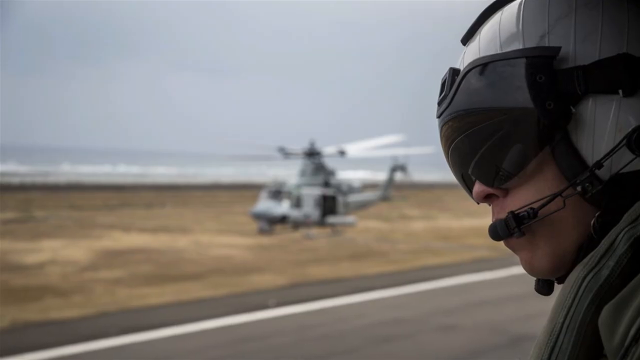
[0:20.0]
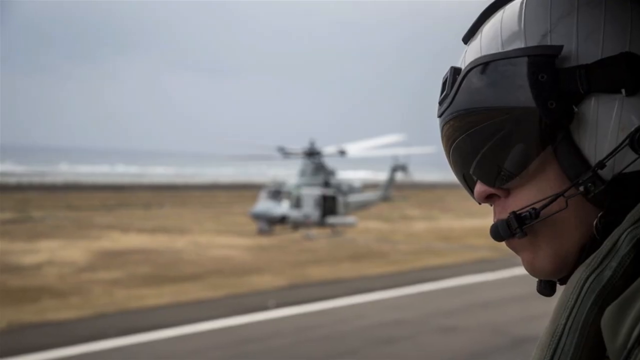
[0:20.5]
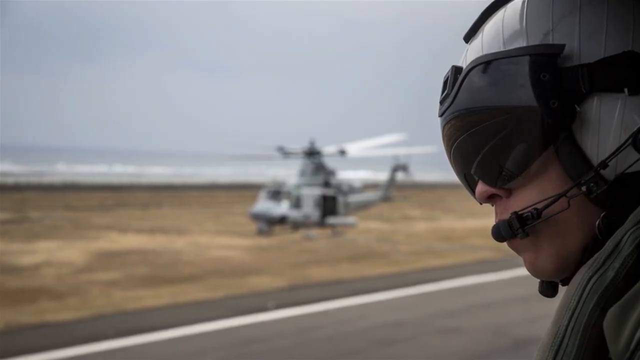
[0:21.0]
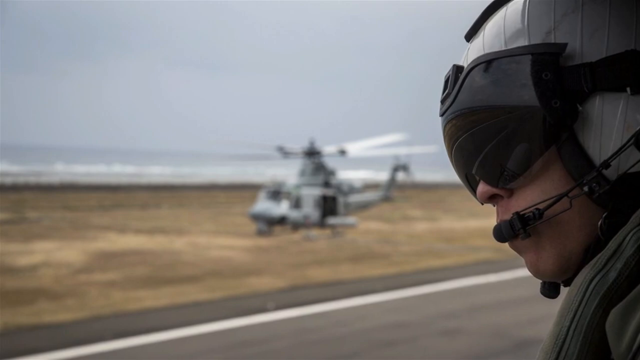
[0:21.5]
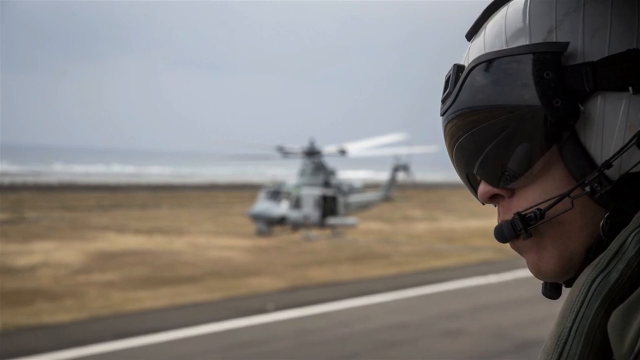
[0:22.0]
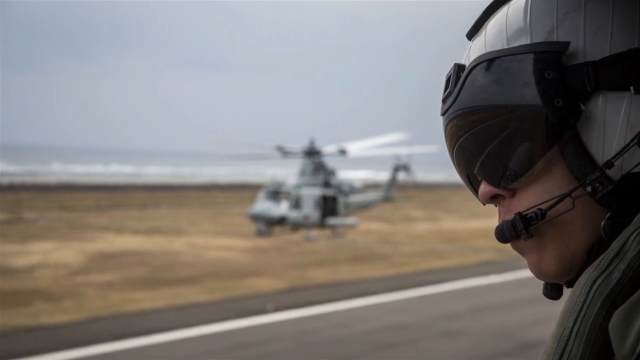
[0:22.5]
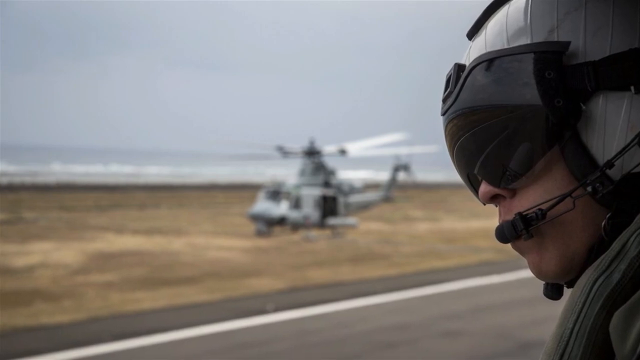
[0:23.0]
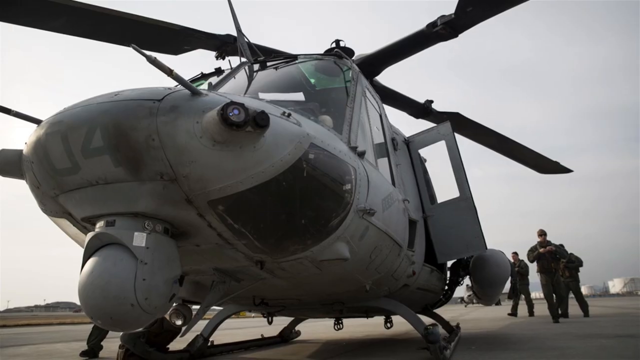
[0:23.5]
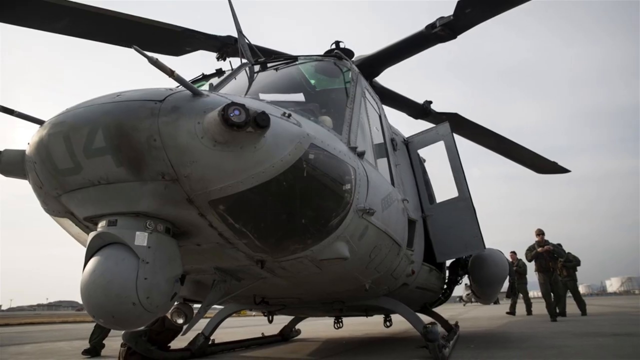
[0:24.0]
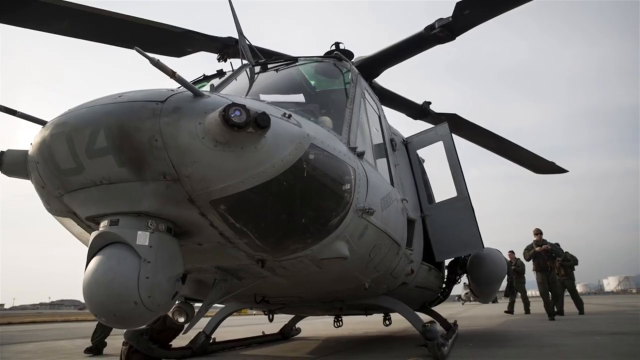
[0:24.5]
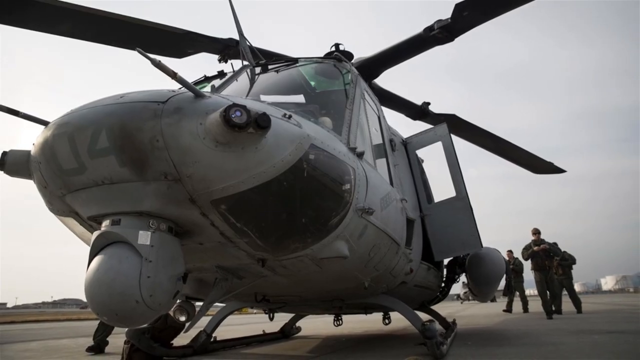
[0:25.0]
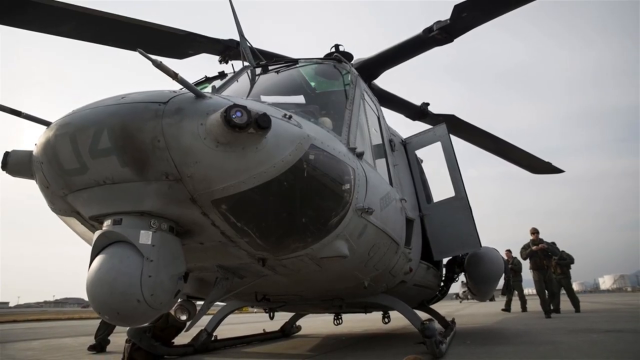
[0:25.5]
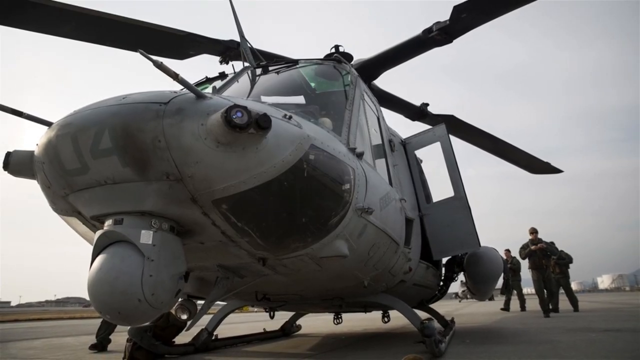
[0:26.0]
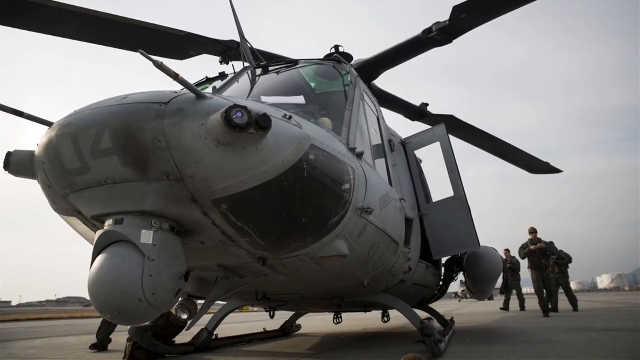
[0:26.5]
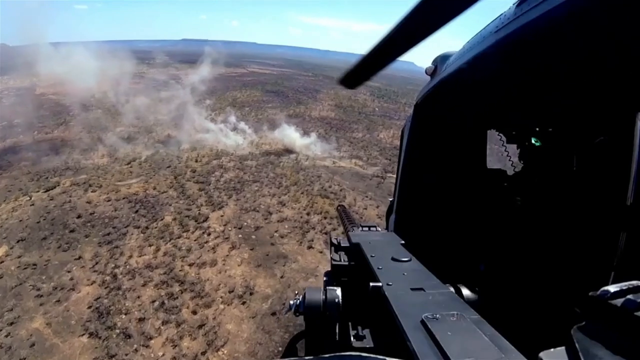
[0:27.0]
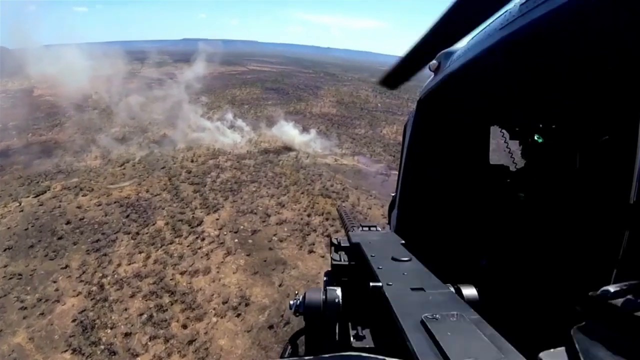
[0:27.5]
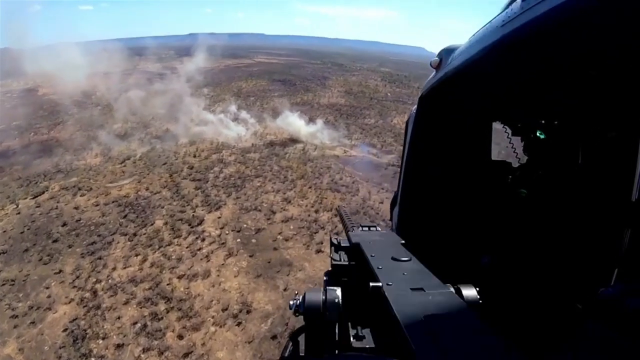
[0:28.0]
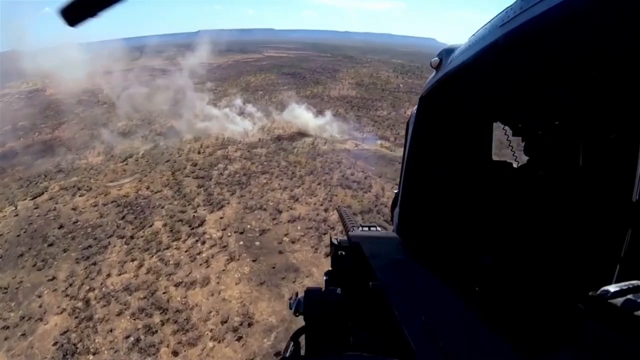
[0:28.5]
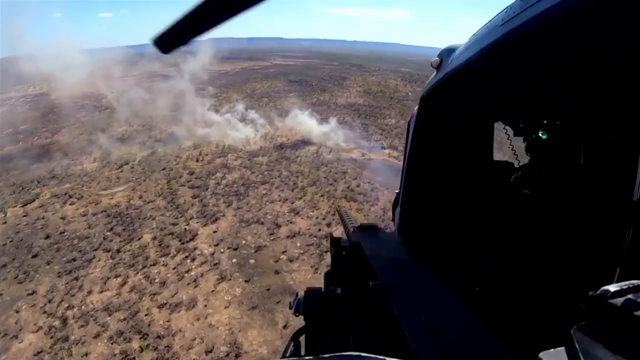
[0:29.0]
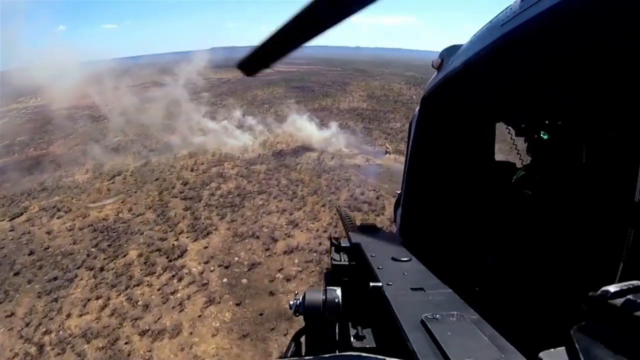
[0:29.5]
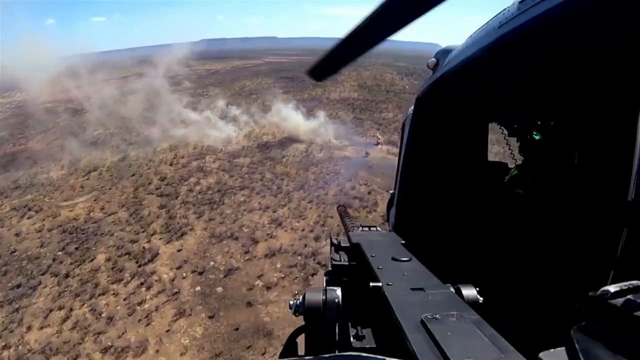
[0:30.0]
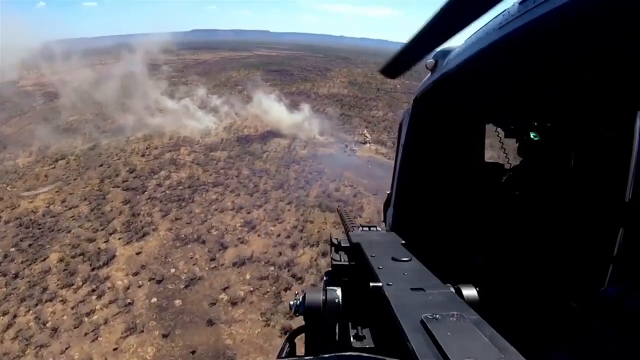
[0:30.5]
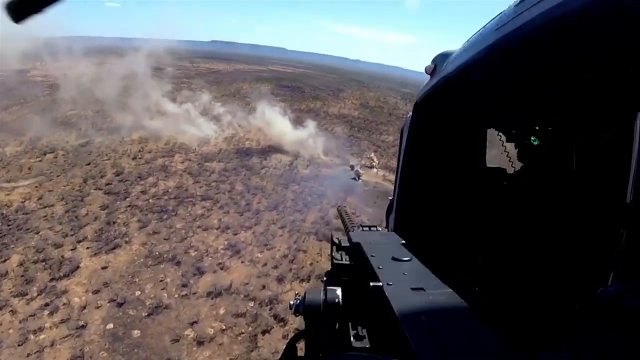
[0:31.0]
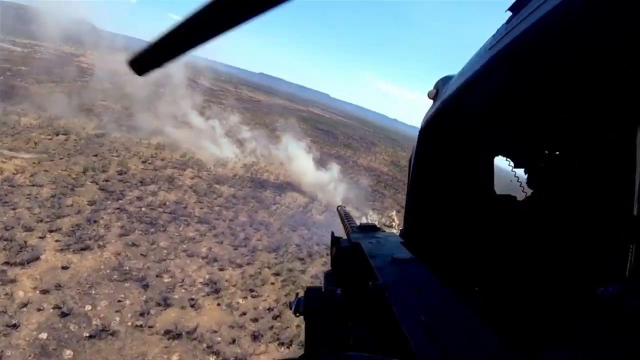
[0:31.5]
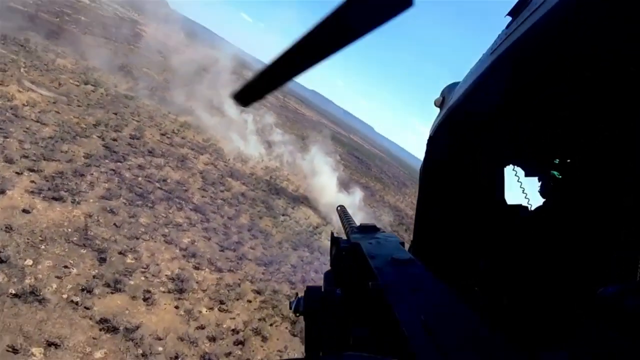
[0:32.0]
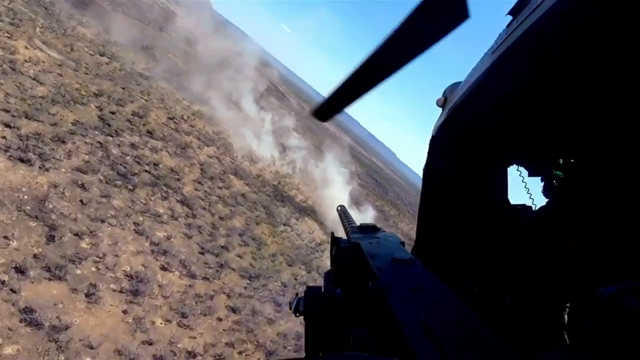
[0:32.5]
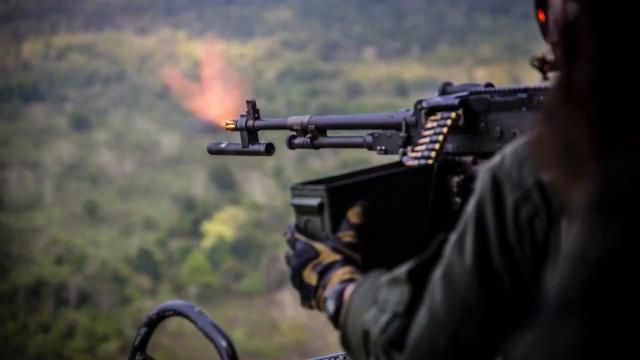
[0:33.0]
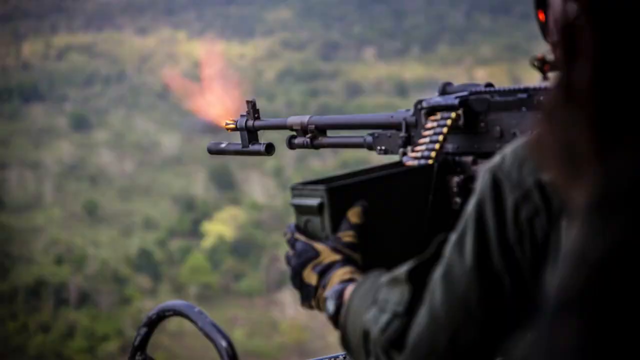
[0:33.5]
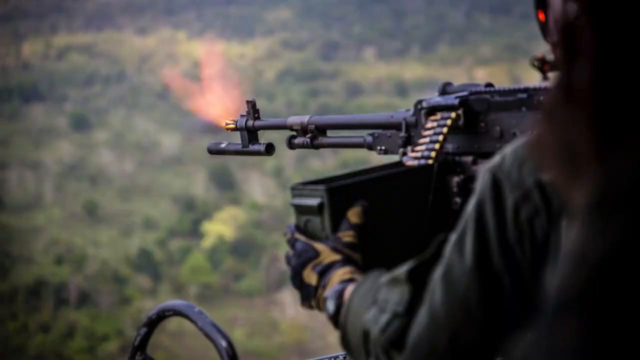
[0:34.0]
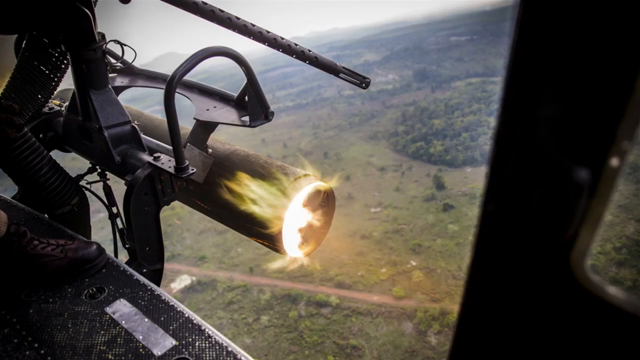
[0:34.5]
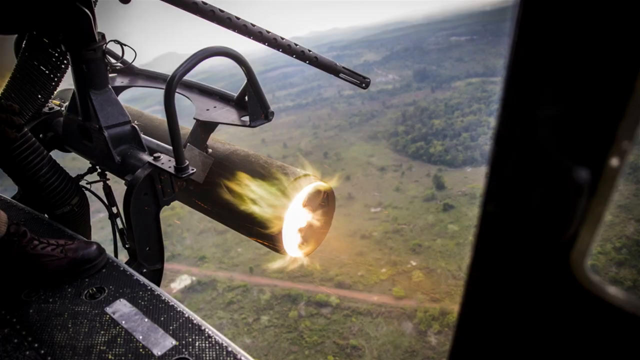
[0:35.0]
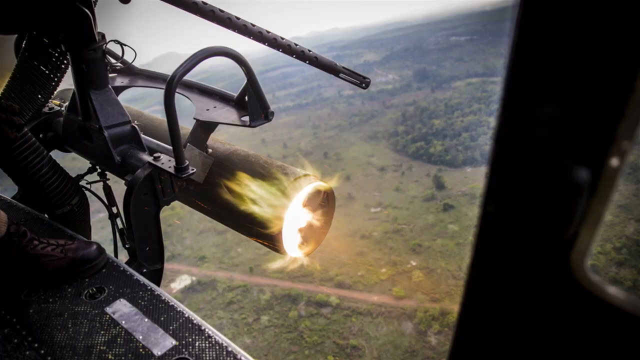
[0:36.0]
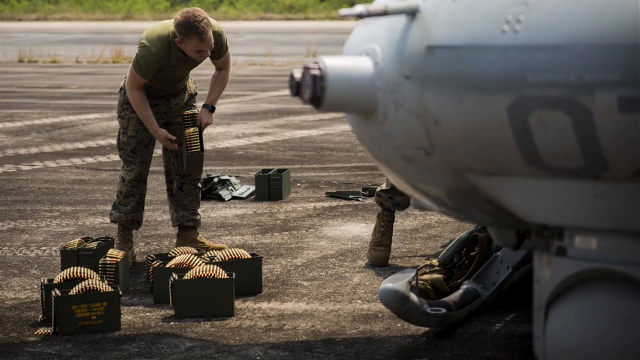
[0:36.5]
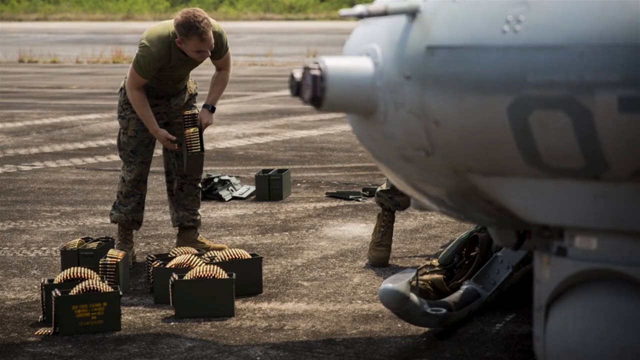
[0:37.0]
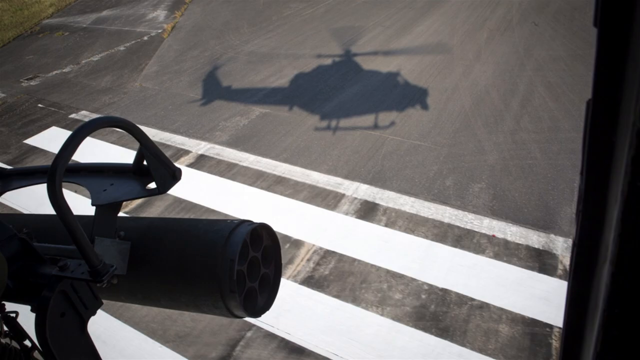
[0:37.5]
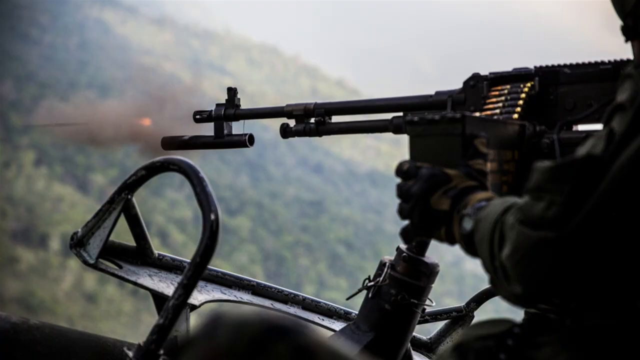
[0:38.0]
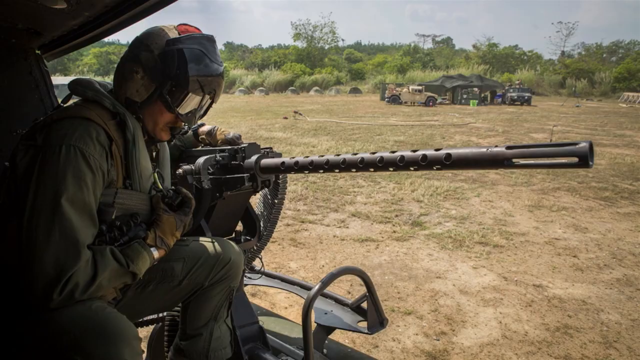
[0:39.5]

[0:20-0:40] Photos of the Huey attack helicopter appear; the helicopters apparently come in a wide variety of military colors, seemingly mostly gray and black. The footage shows the helicopter firing its sixty caliber machine guns and rockets from its rocket pods. The target cannot be made out because of huge plumes of smoke rising from the ground, but bullets are fired at it and missiles are fired from the bays of the helicopter. Soldiers load the guns with ammo, and missiles are fired once again. The segment ends with a series of photos of pilots flying the helicopters and door gunners firing weapons at apparently random targets that are not visible.